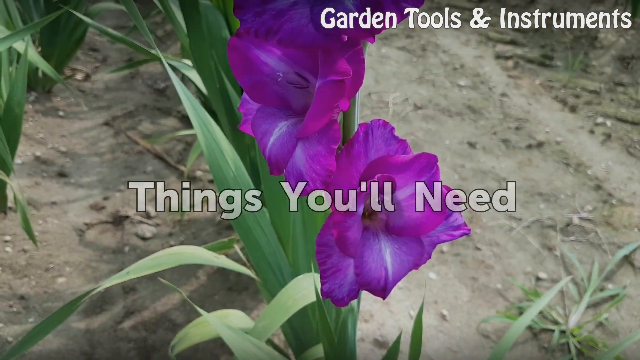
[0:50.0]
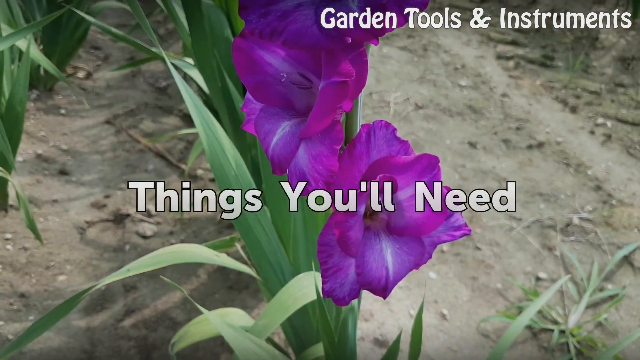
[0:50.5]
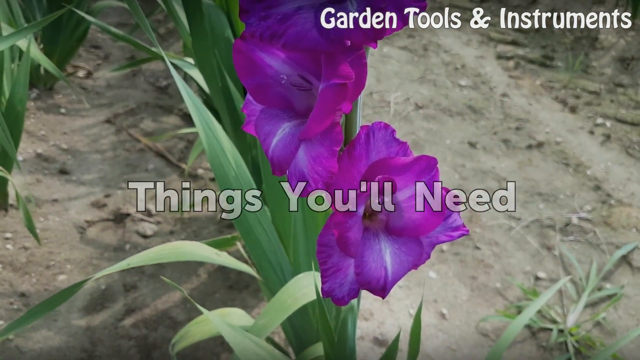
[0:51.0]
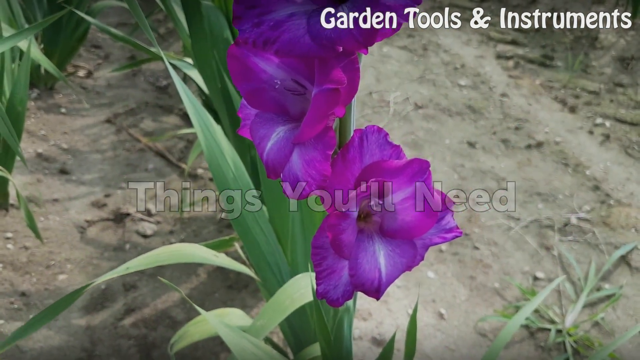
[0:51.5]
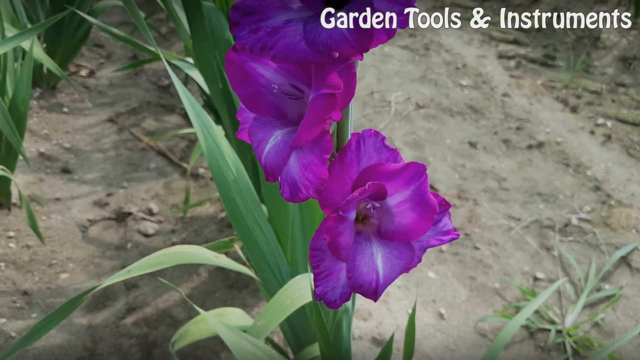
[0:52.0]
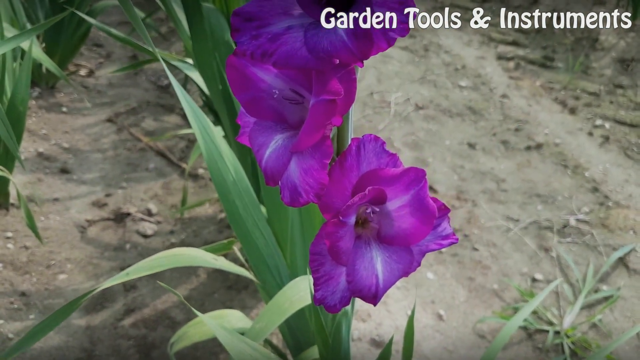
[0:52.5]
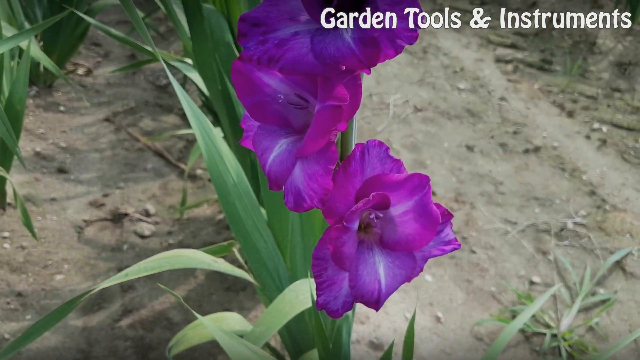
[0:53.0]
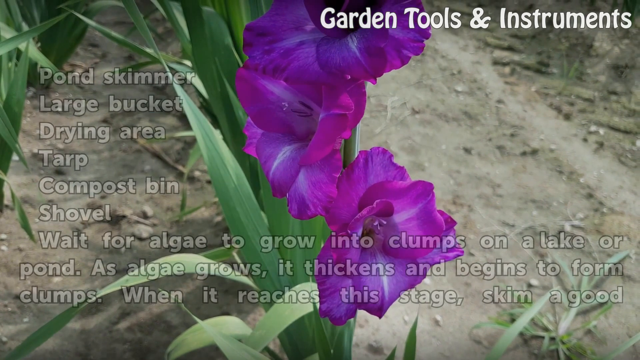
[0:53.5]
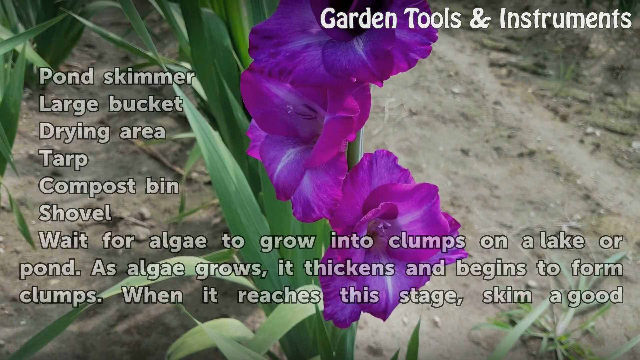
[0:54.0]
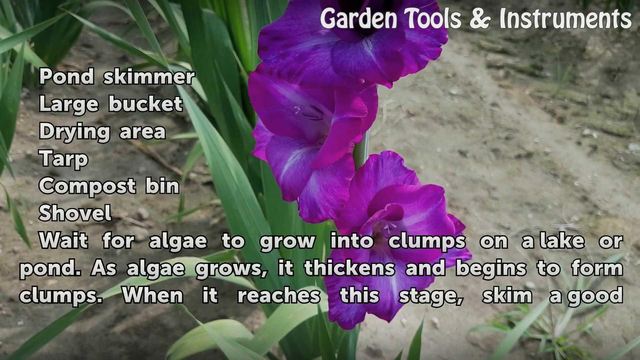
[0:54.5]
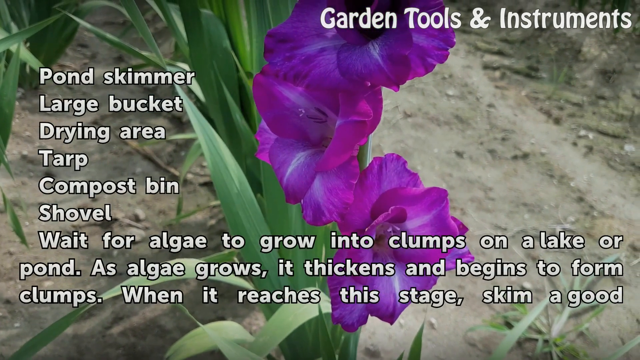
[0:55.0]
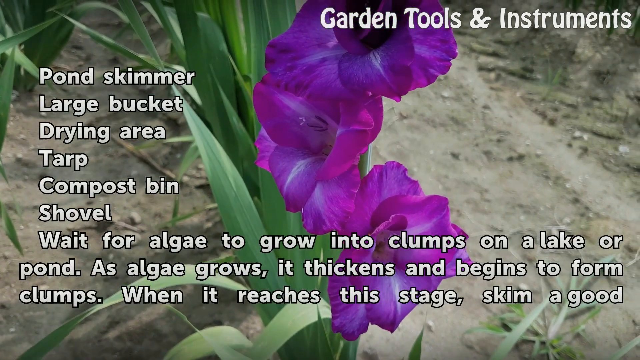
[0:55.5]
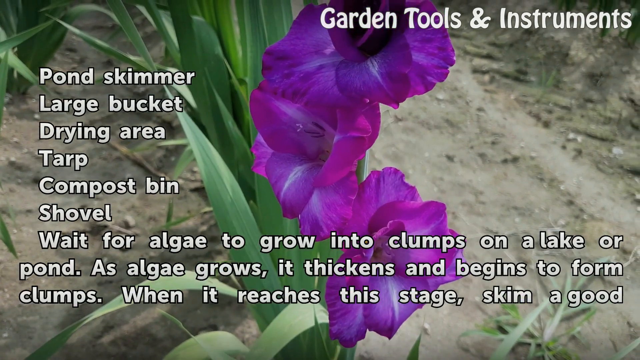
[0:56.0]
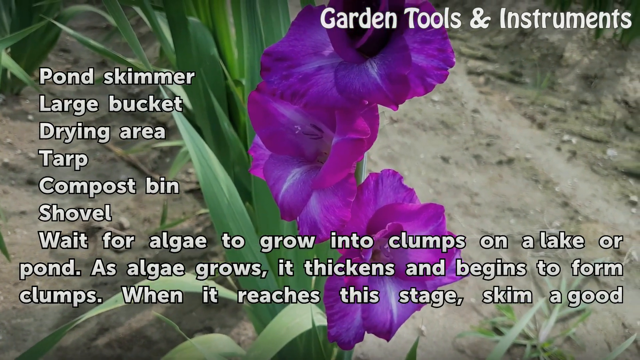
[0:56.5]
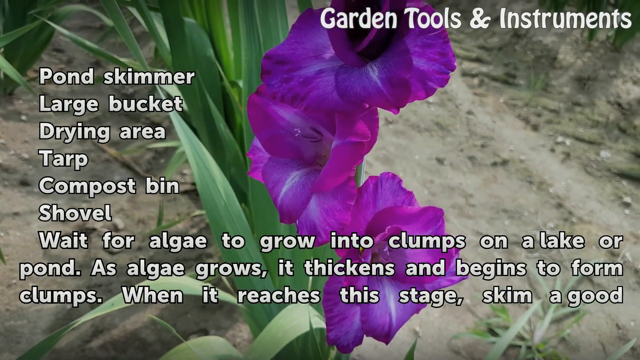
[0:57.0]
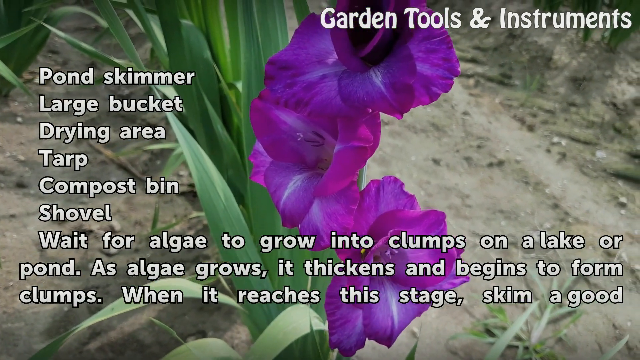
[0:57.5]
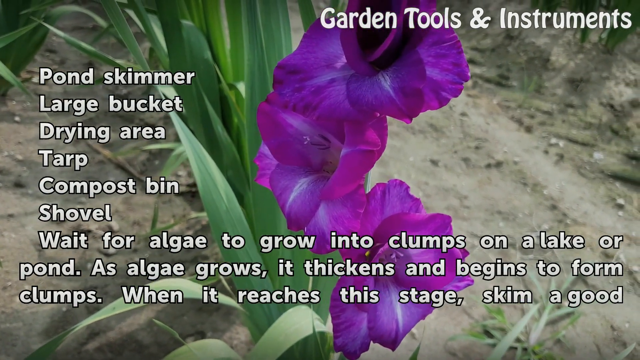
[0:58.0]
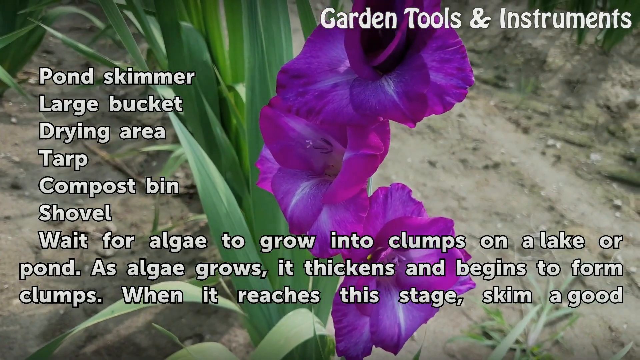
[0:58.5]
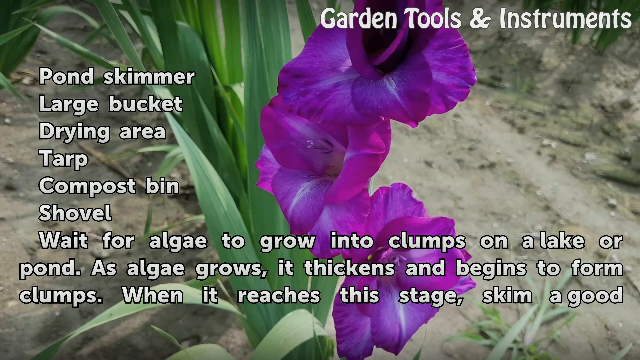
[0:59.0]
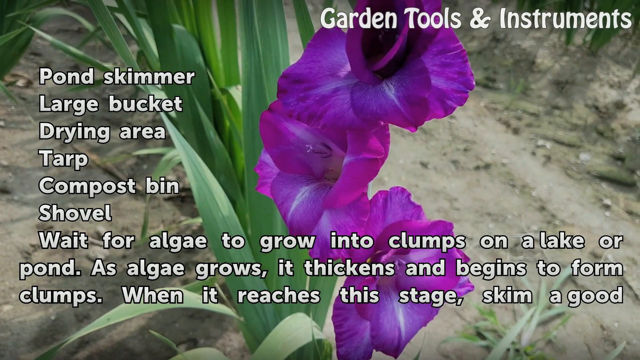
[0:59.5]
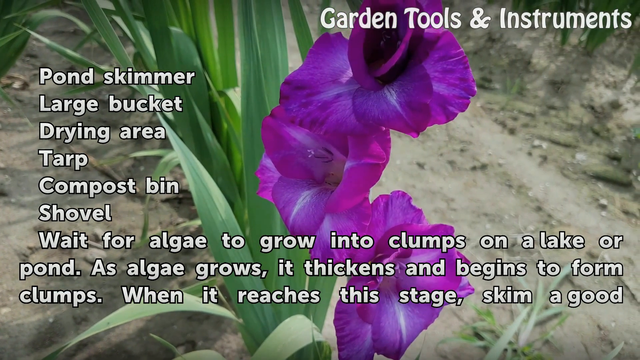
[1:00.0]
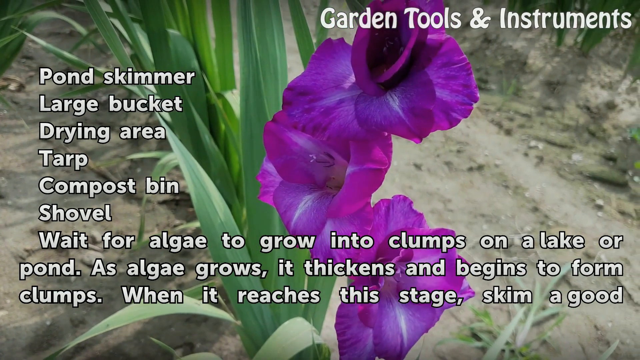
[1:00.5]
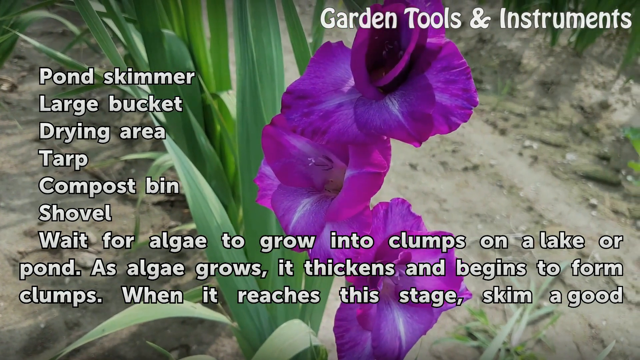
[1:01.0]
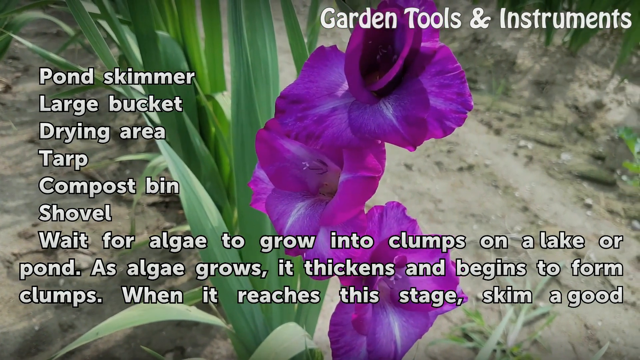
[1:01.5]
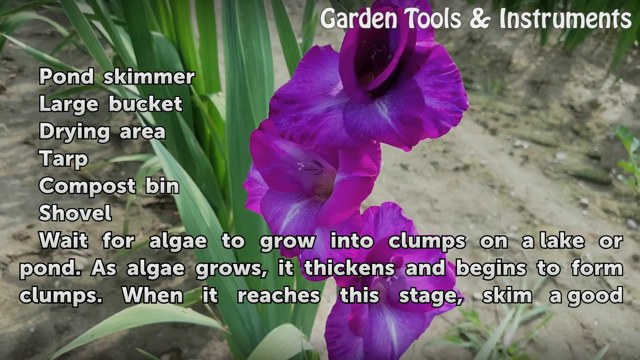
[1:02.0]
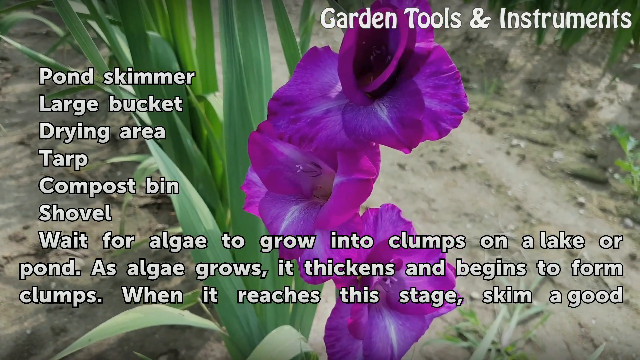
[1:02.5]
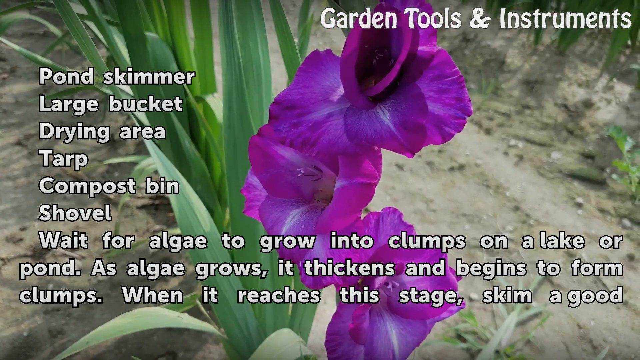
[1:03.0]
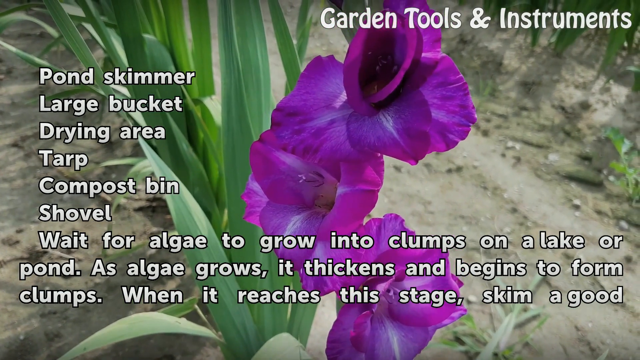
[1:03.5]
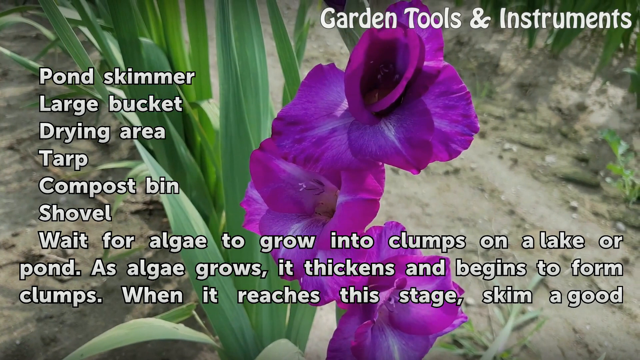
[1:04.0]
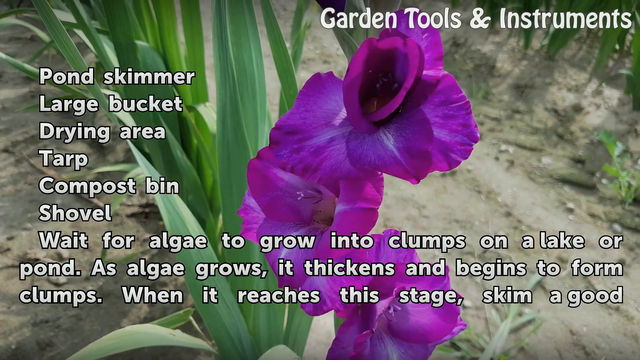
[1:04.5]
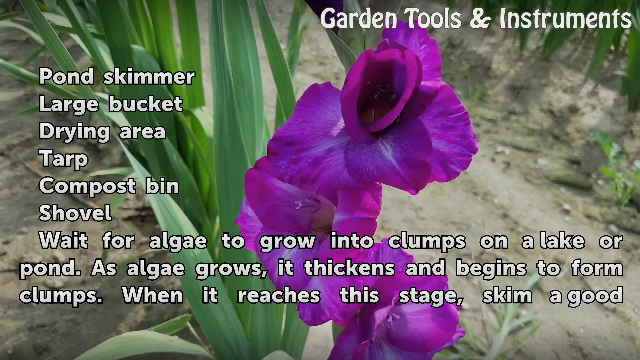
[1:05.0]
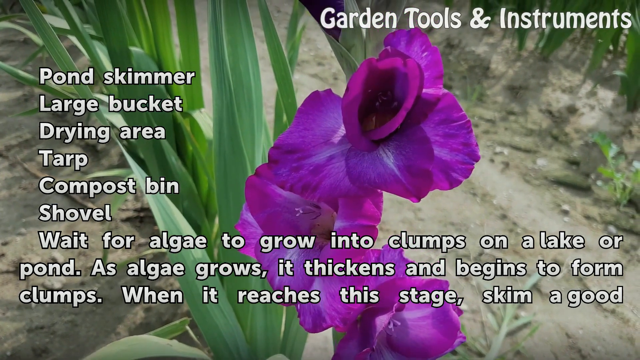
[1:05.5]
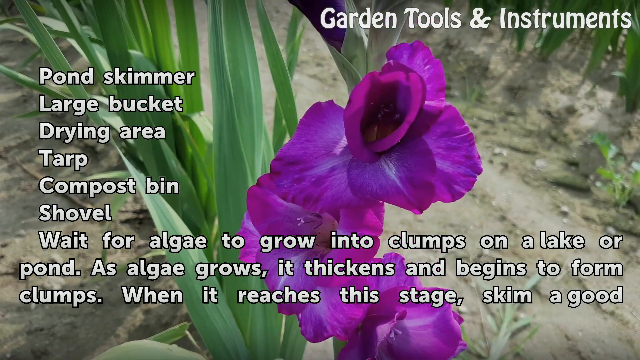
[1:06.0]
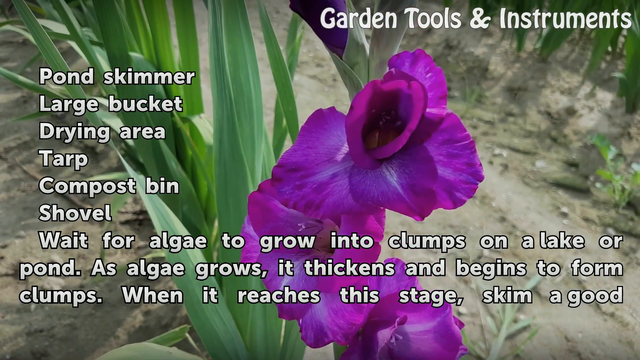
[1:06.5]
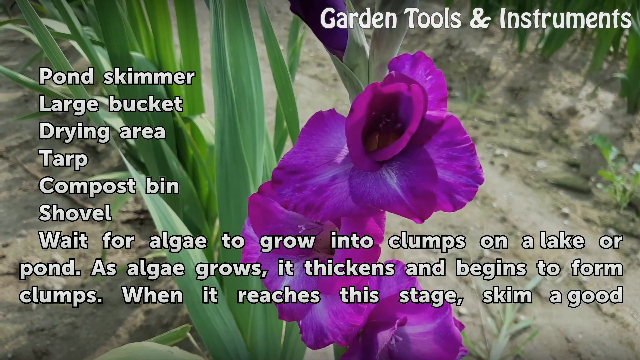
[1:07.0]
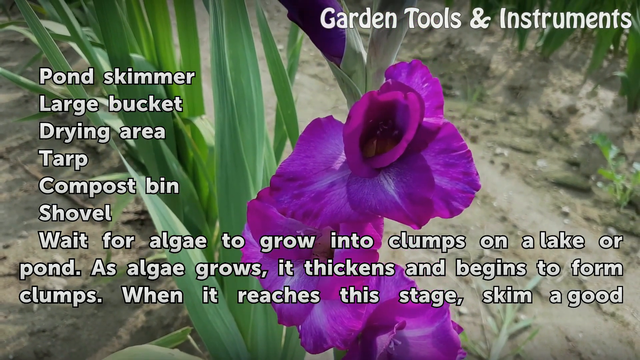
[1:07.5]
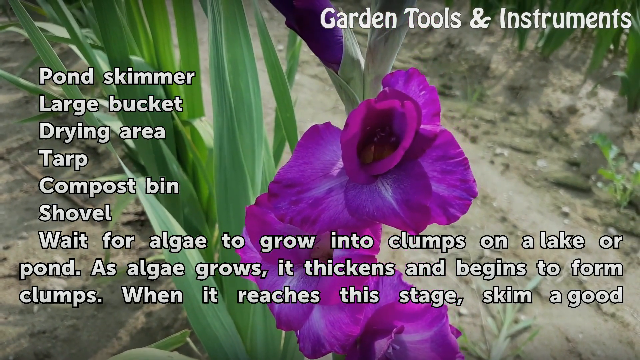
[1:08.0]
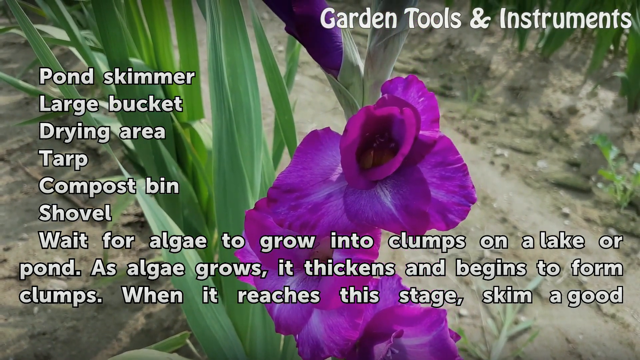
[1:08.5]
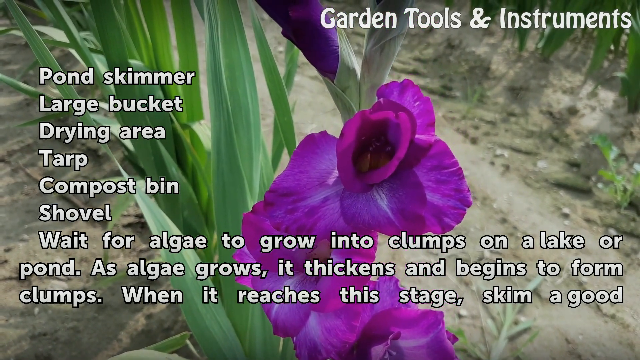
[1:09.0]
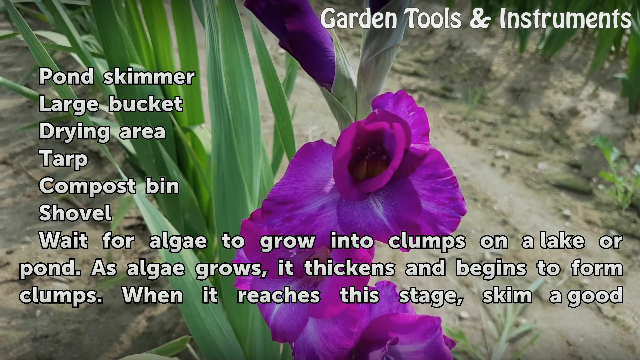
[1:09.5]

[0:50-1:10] A purple gladiola flower appears in another mostly still picture. White letters come up, listing the items needed: "pond skimmer, large bucket, drying area, tarp, compost bin, shovel". The text continues: "wait for algae to grow into clumps on a lake or a pond. As algae grows, it thickens and begins to form clumps."